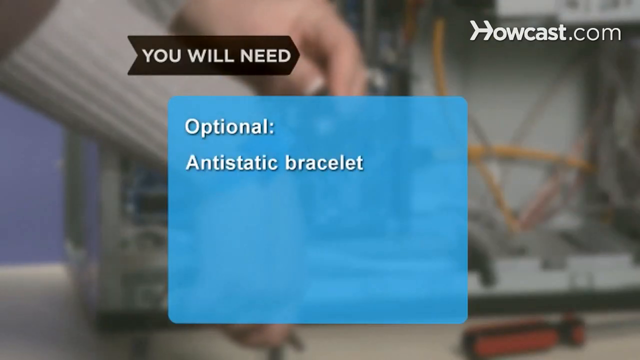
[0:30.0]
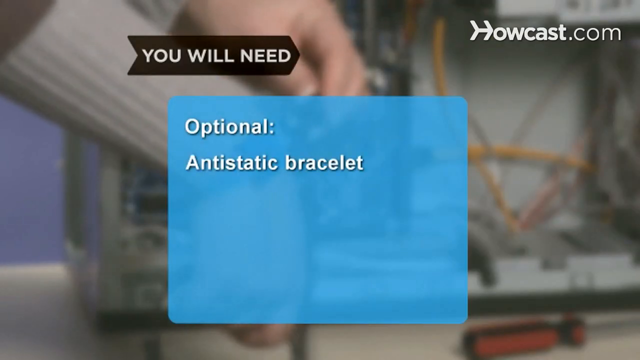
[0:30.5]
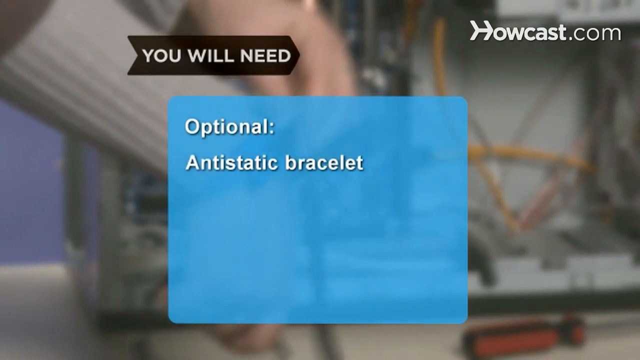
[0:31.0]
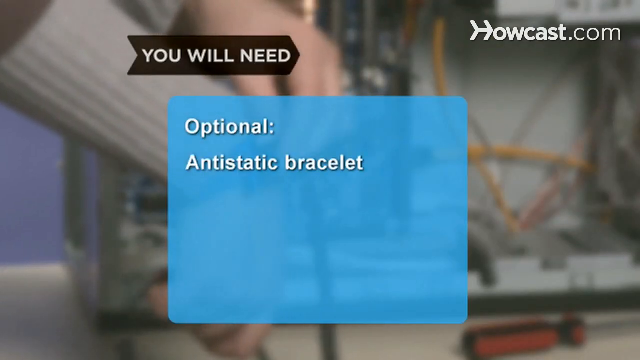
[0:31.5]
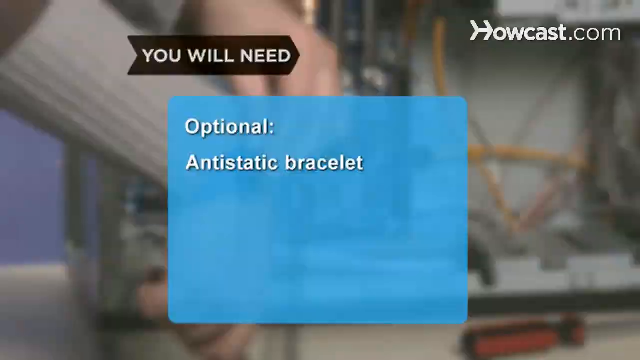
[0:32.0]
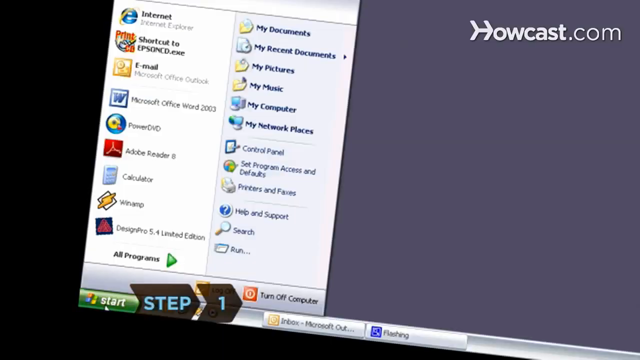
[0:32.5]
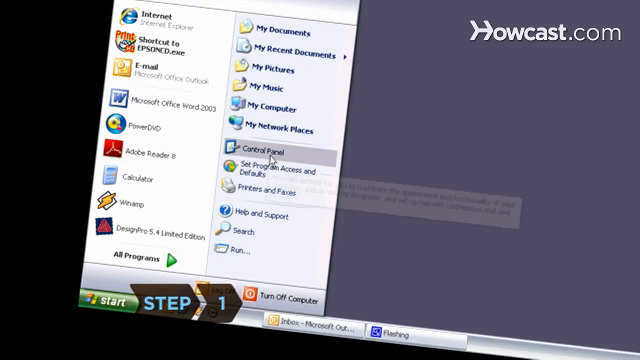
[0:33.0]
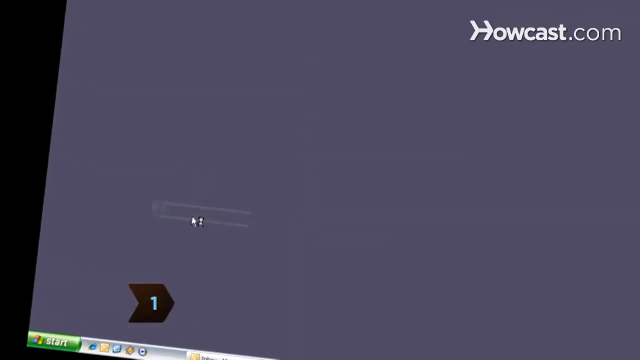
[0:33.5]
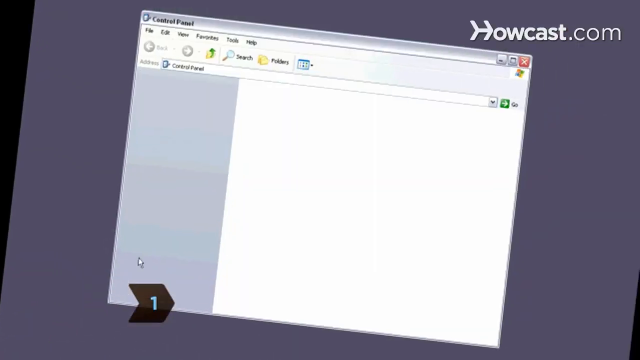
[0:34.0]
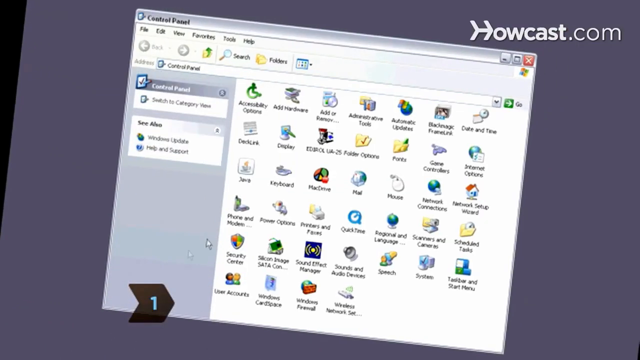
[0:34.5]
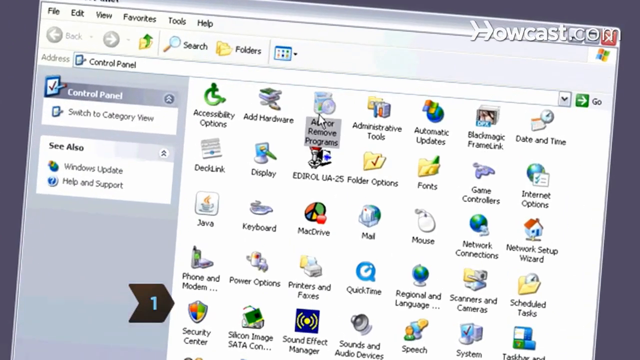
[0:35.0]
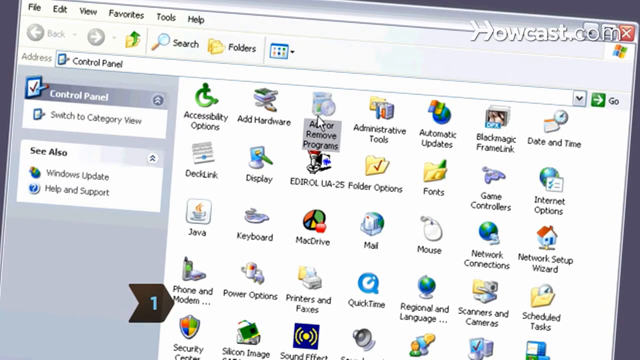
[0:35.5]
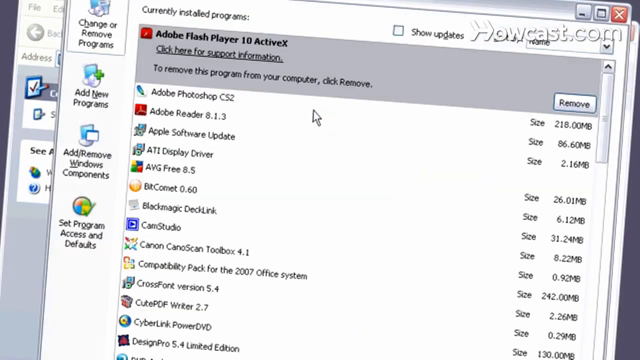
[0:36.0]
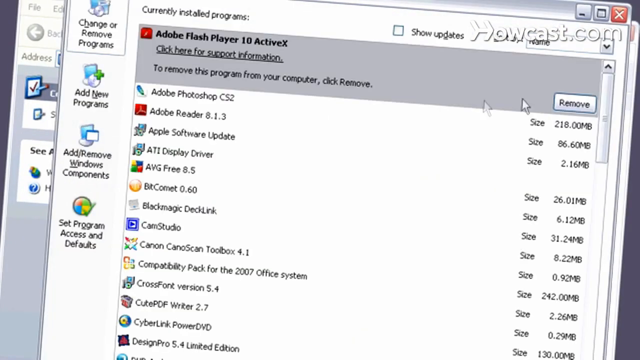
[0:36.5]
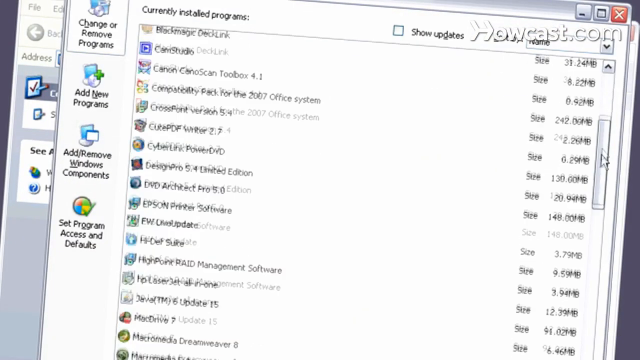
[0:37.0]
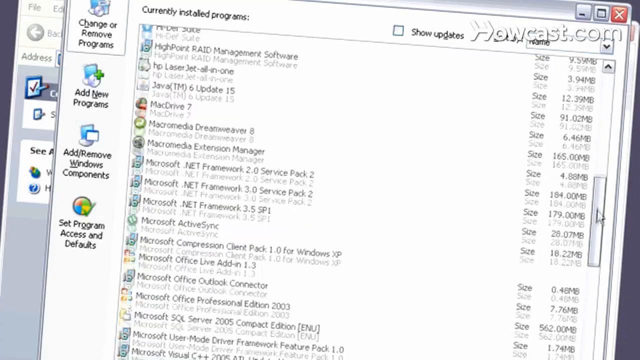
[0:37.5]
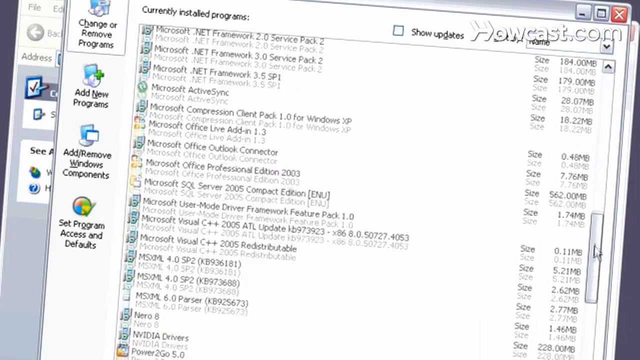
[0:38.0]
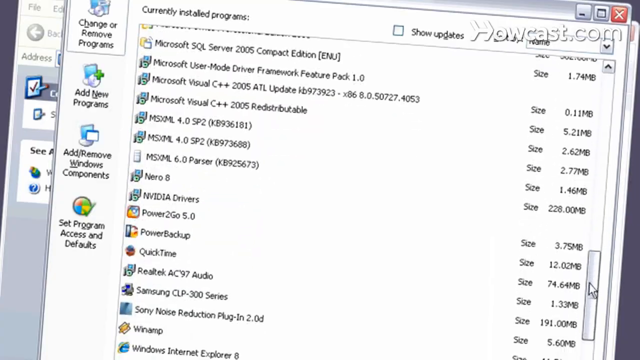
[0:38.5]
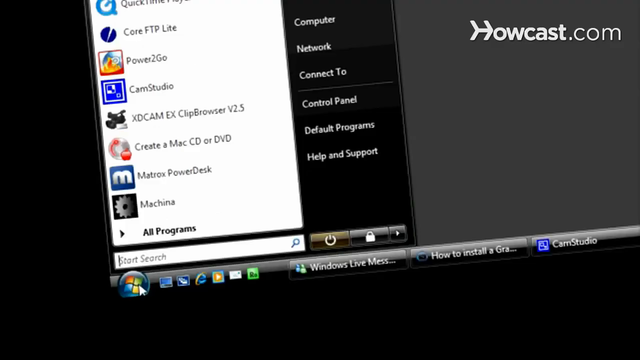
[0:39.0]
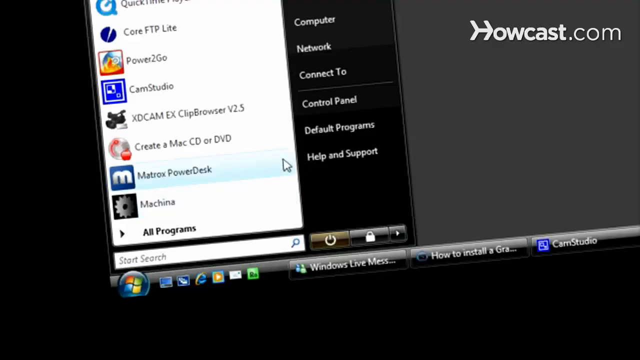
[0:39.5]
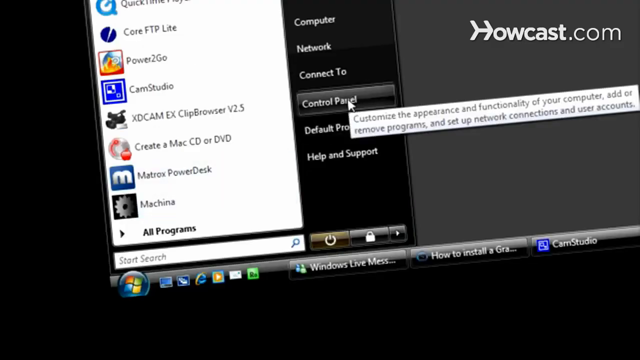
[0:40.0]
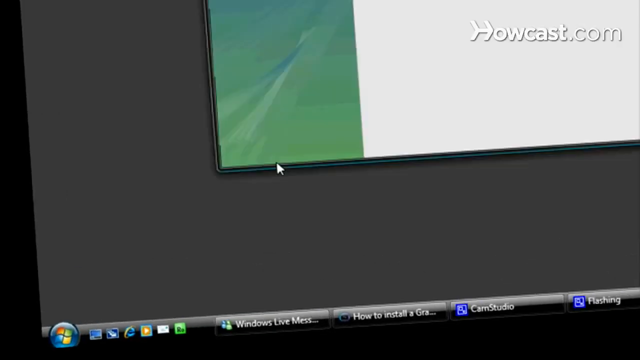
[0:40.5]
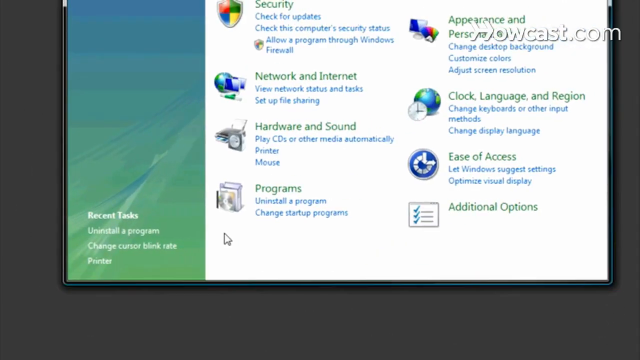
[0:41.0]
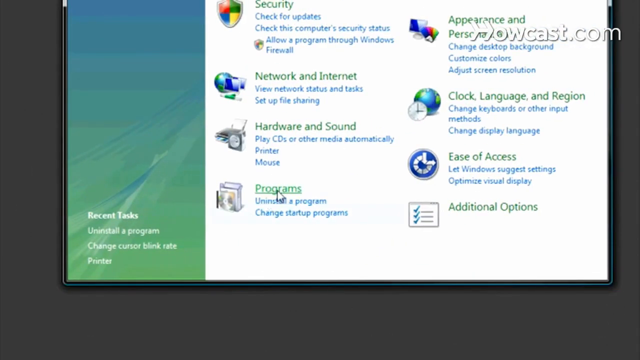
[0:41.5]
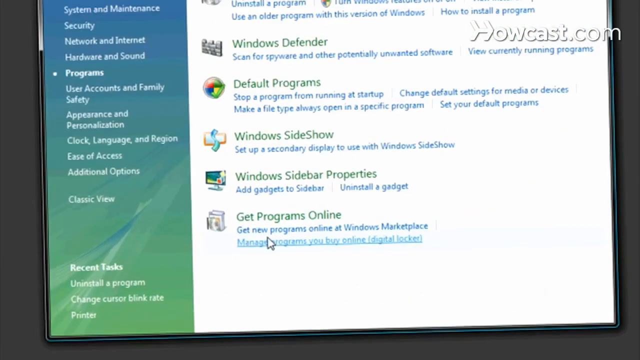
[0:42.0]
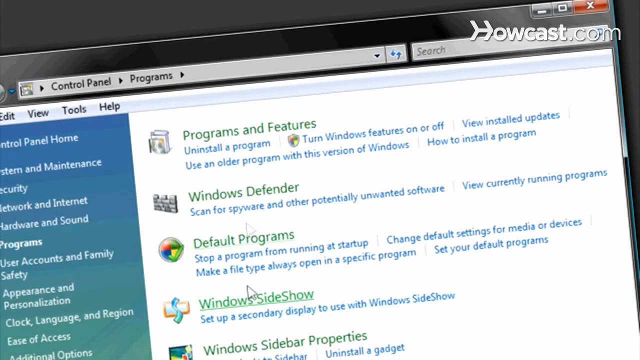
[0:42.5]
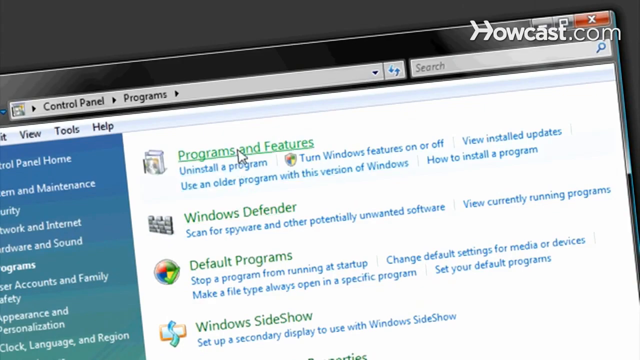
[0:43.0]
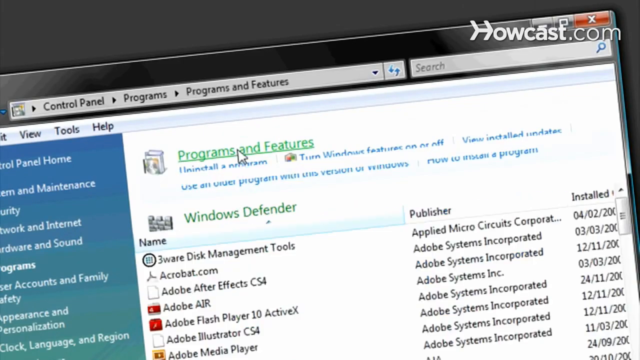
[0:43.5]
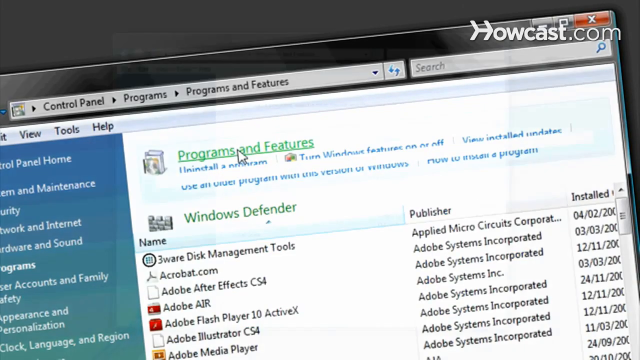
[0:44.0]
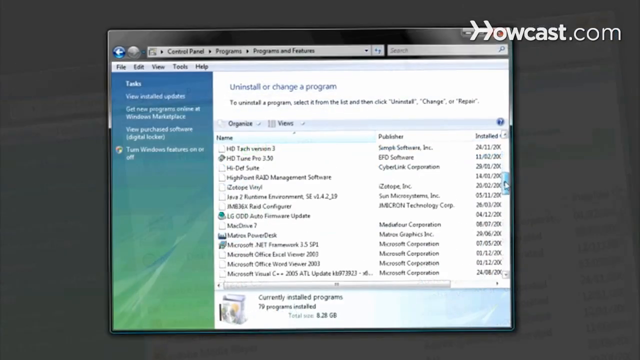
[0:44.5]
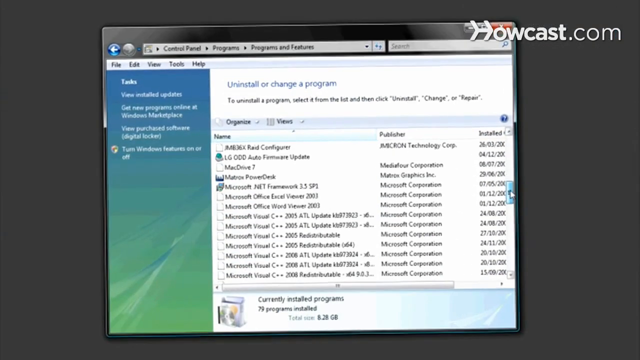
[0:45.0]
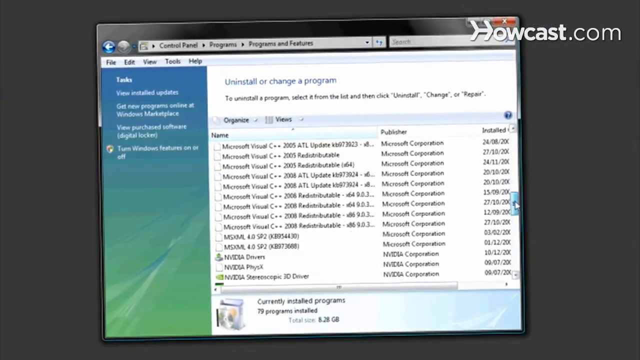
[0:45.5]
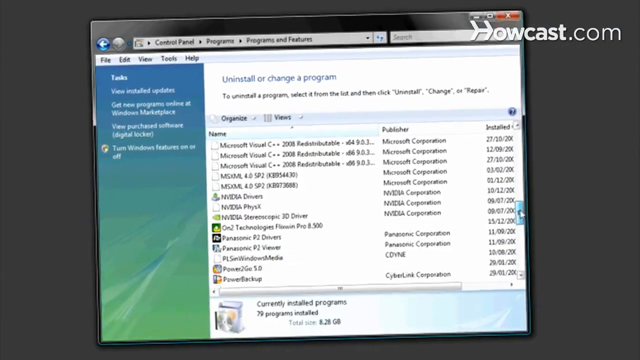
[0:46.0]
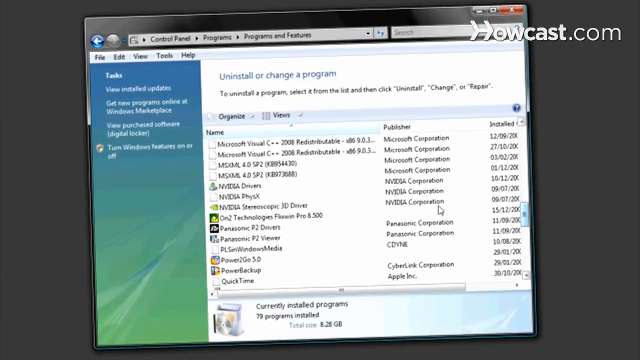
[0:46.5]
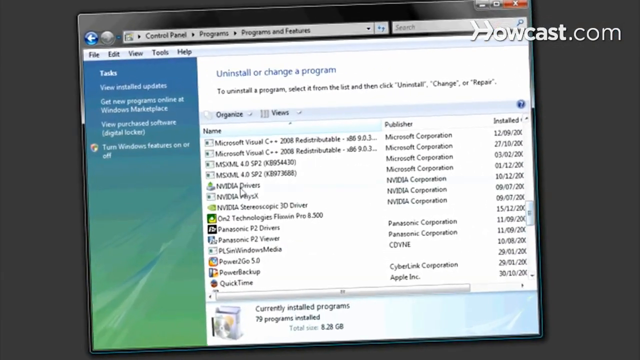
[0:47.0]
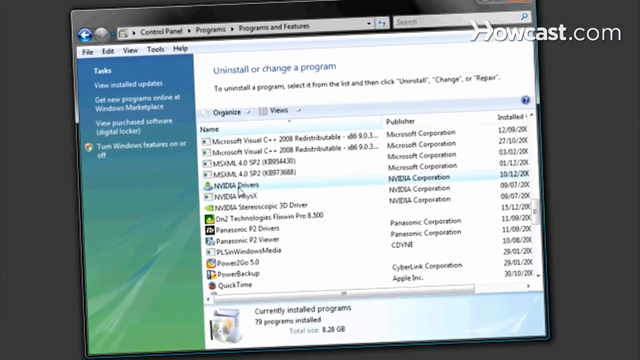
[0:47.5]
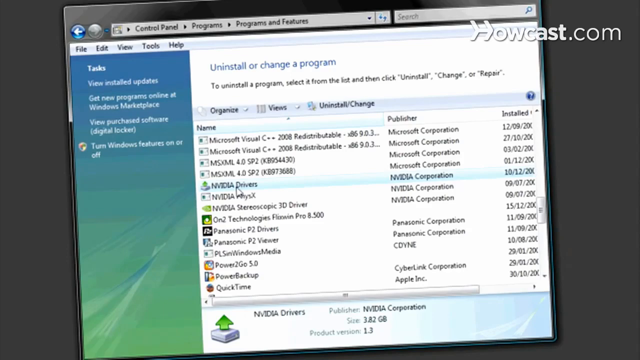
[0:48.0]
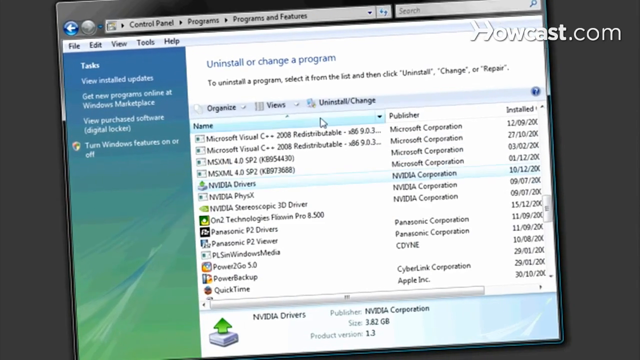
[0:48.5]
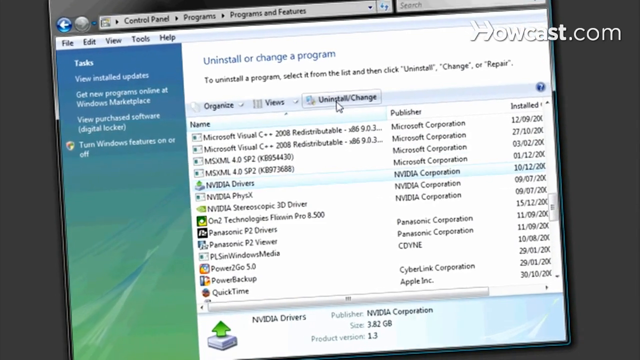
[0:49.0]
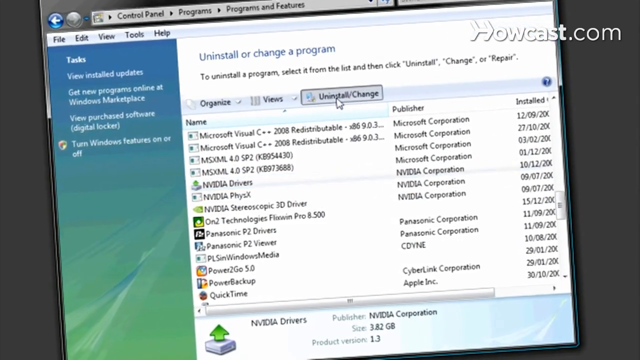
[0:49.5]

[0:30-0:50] The Control Panel is opened on the computer. From the Control Panel the screen moves to Programs and then, apparently, to Program Features, which is used to install or uninstall software. A man uninstalls something, though what he uninstalls is unclear.